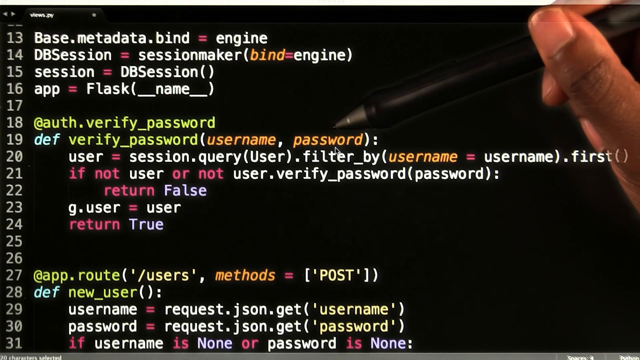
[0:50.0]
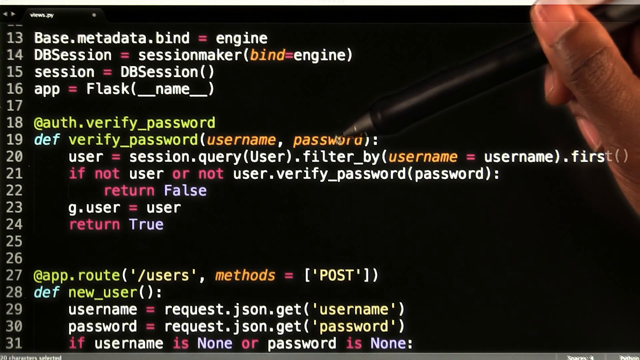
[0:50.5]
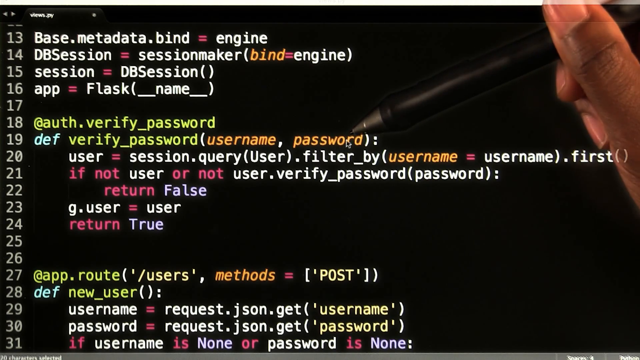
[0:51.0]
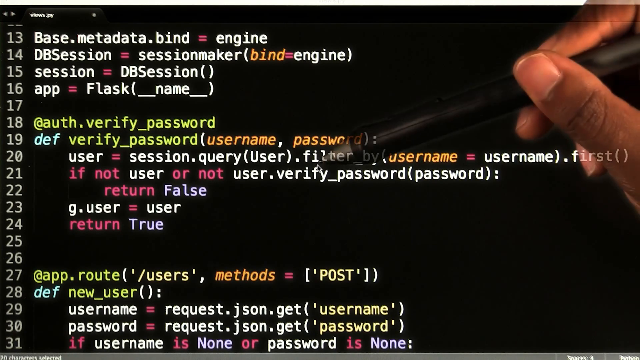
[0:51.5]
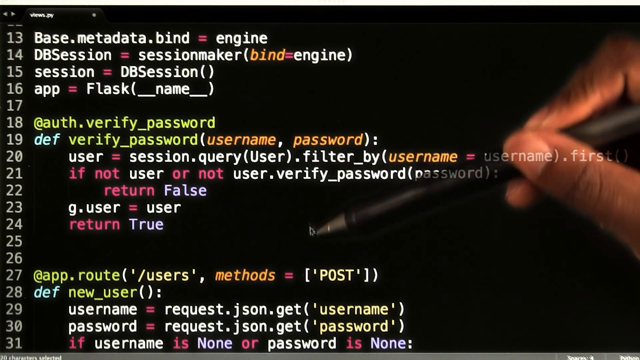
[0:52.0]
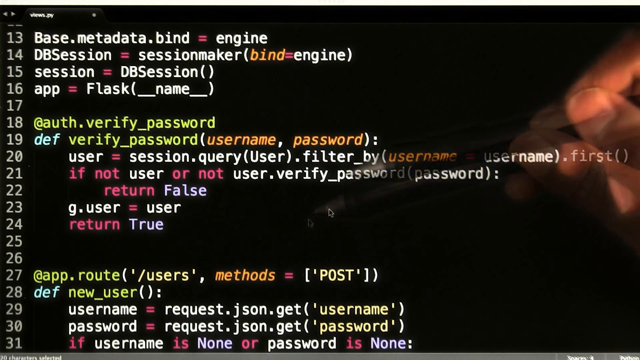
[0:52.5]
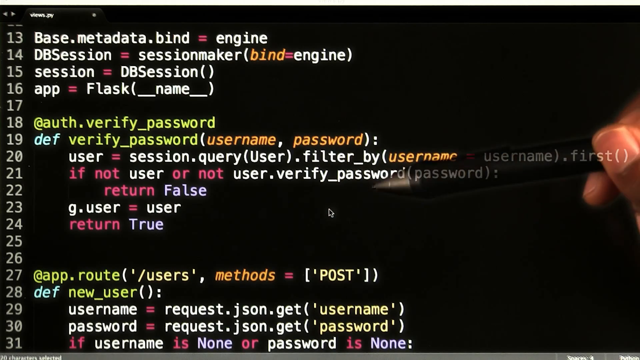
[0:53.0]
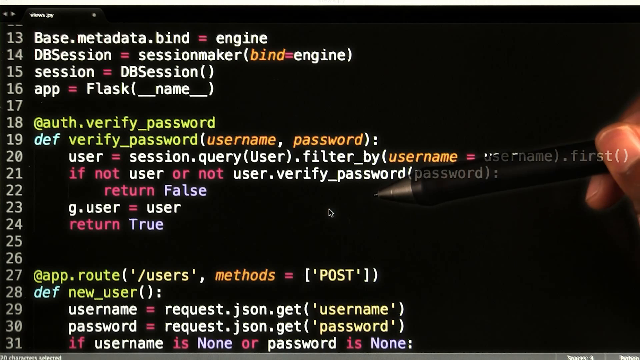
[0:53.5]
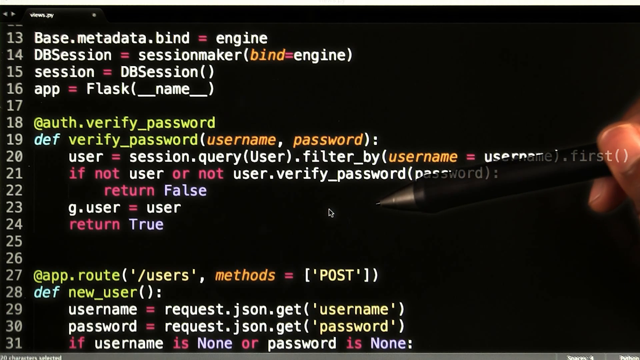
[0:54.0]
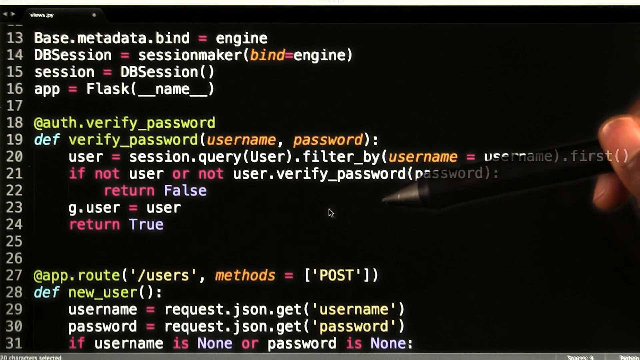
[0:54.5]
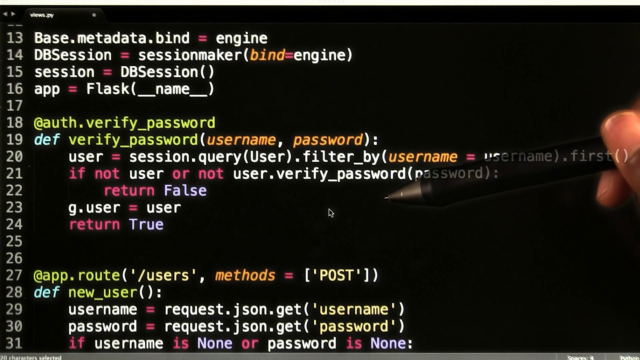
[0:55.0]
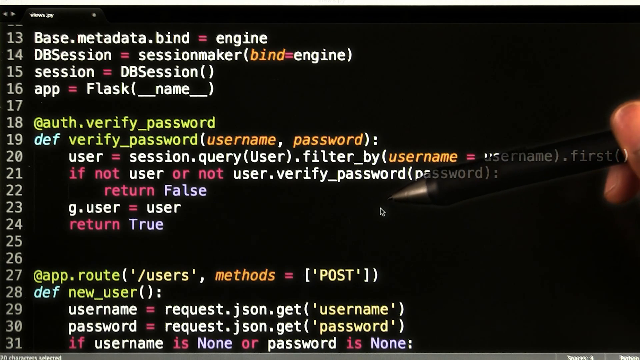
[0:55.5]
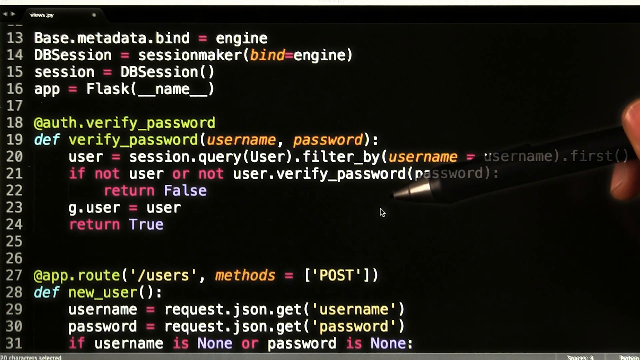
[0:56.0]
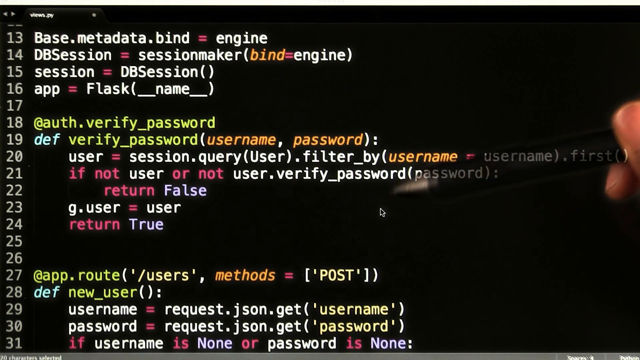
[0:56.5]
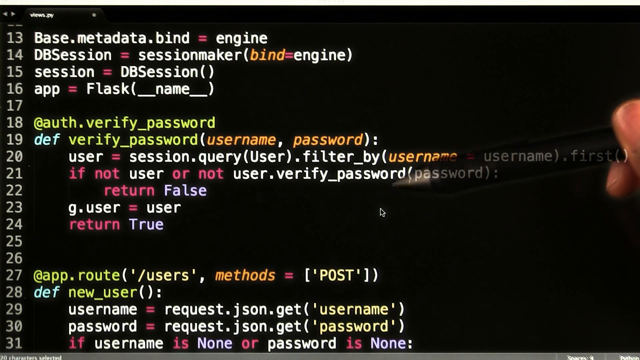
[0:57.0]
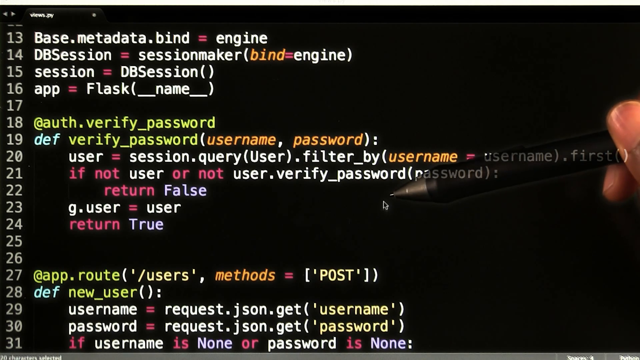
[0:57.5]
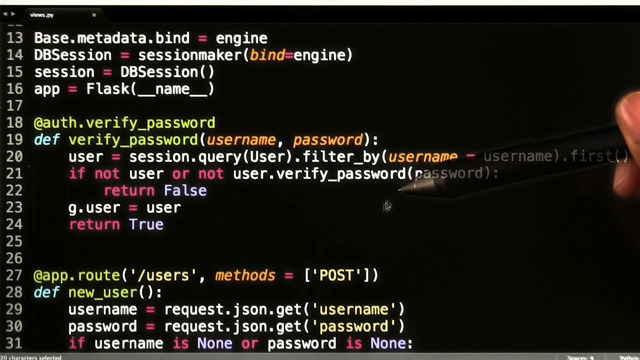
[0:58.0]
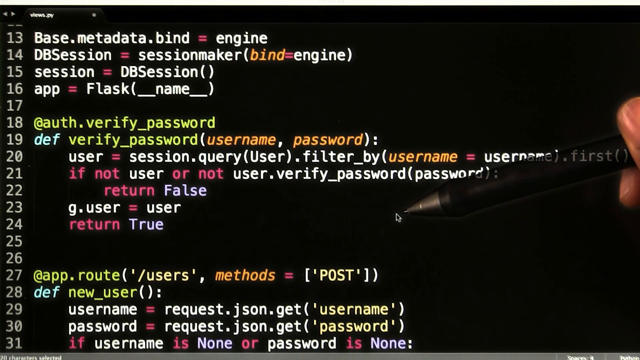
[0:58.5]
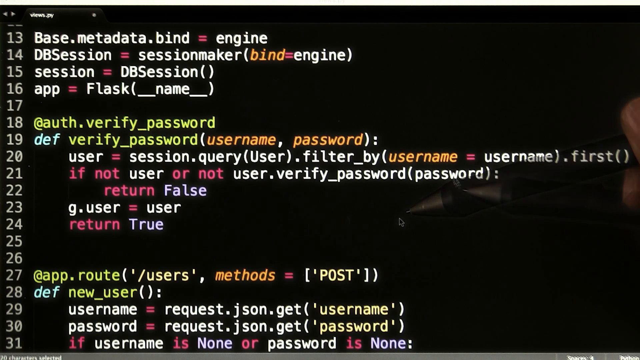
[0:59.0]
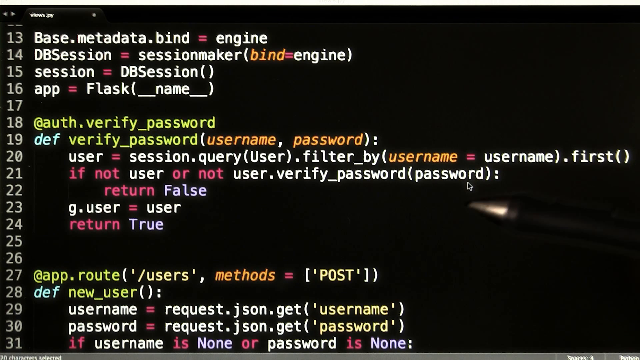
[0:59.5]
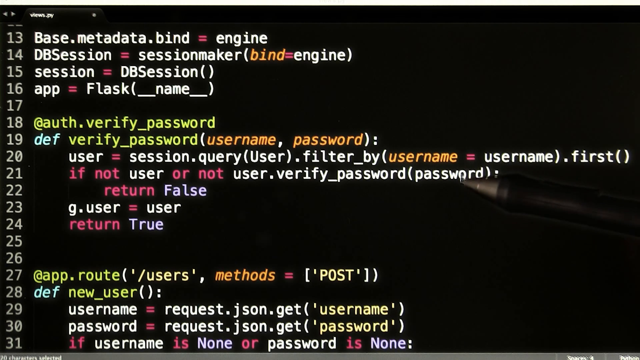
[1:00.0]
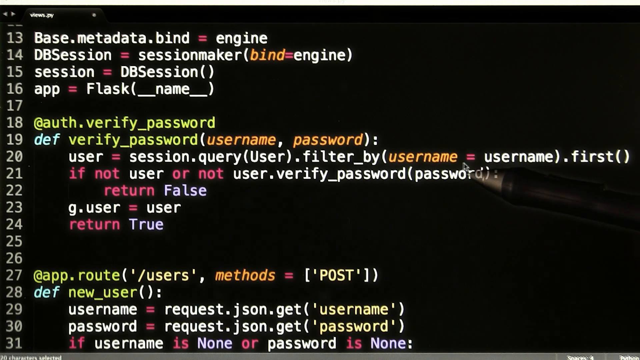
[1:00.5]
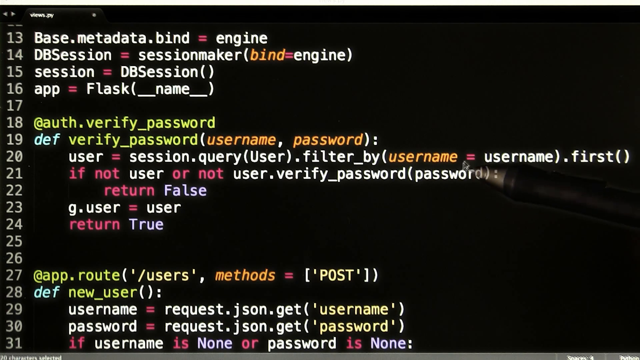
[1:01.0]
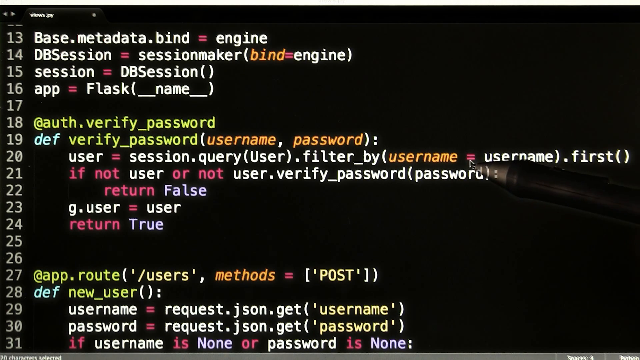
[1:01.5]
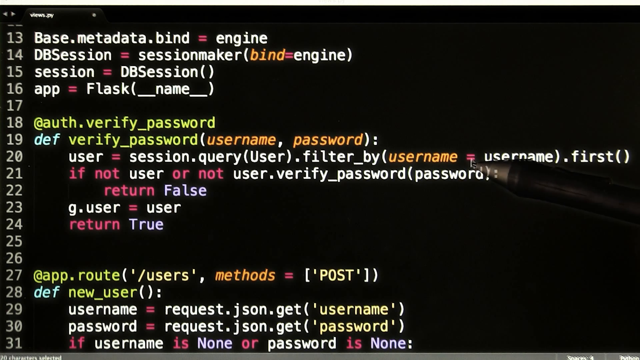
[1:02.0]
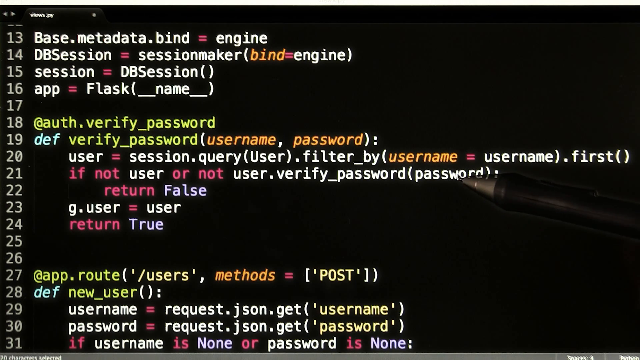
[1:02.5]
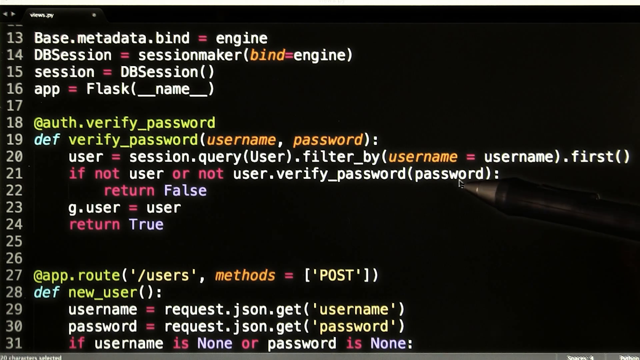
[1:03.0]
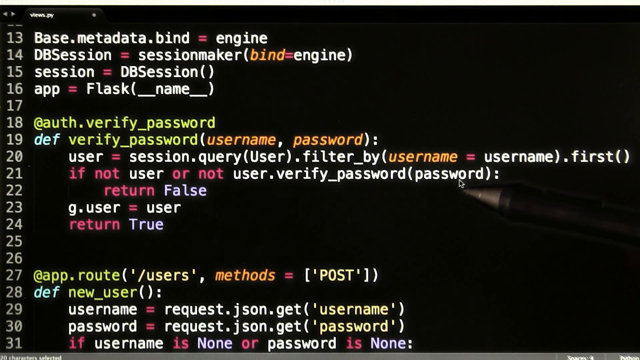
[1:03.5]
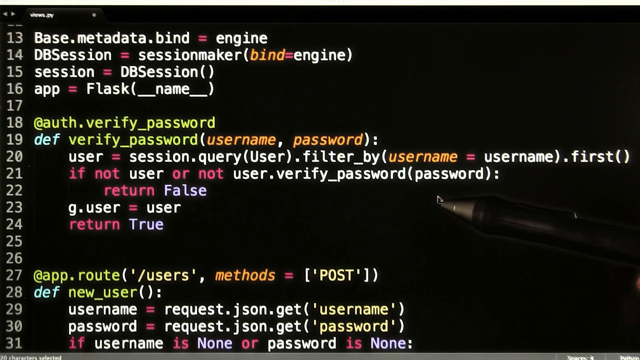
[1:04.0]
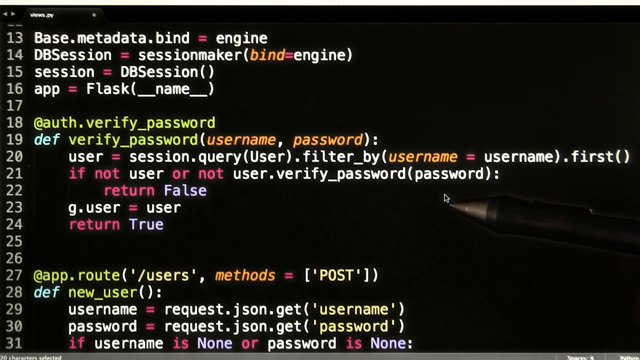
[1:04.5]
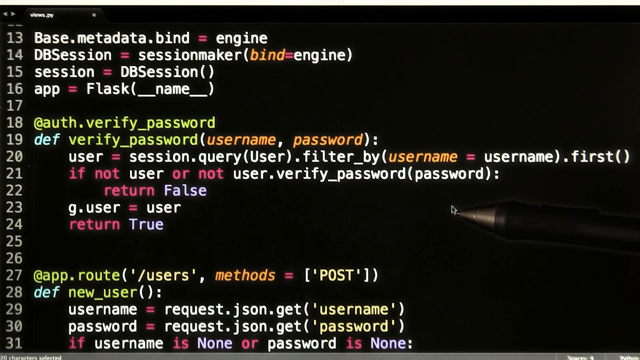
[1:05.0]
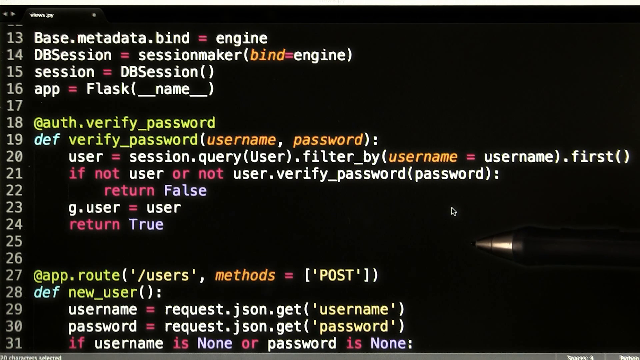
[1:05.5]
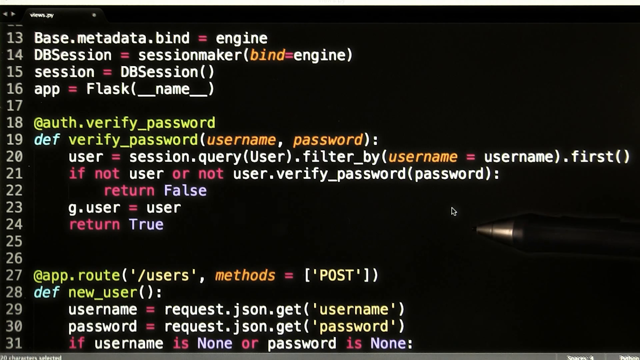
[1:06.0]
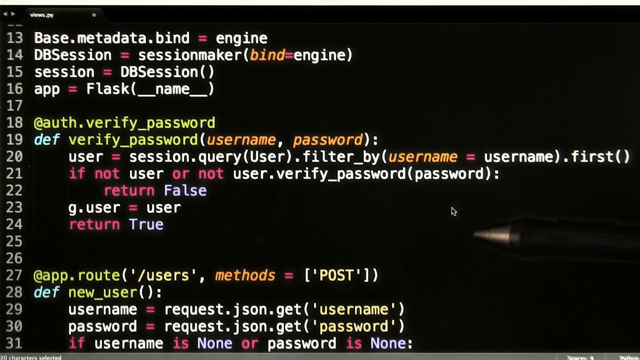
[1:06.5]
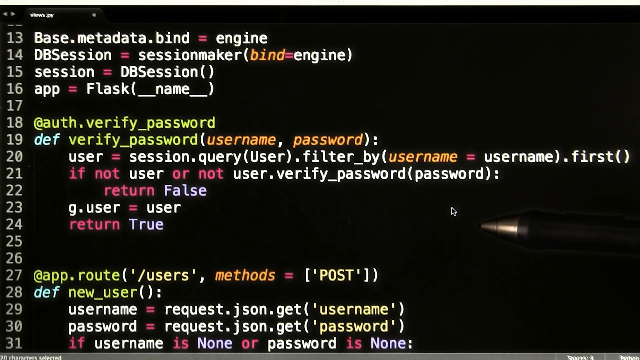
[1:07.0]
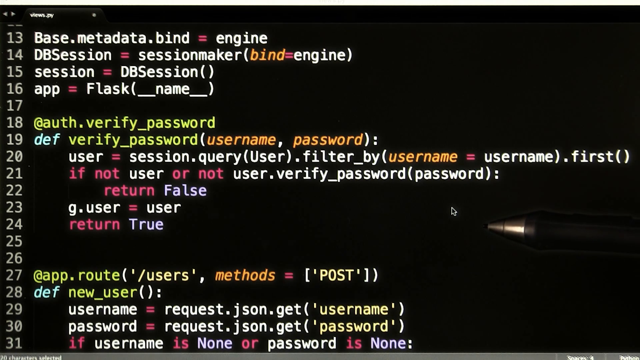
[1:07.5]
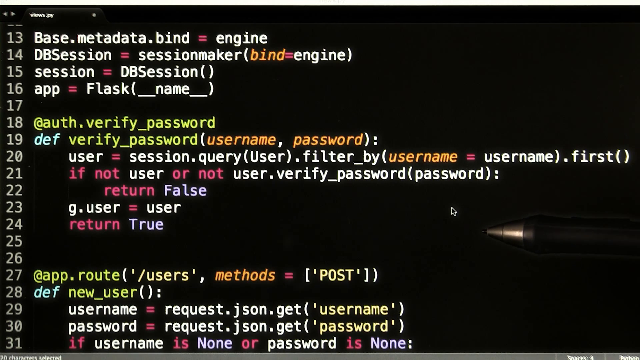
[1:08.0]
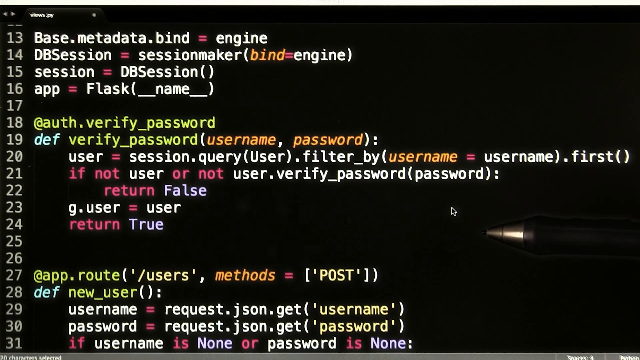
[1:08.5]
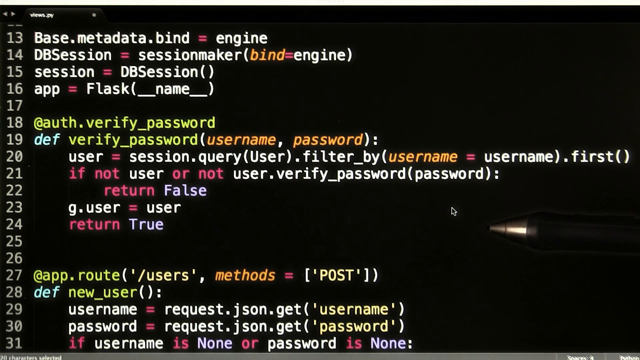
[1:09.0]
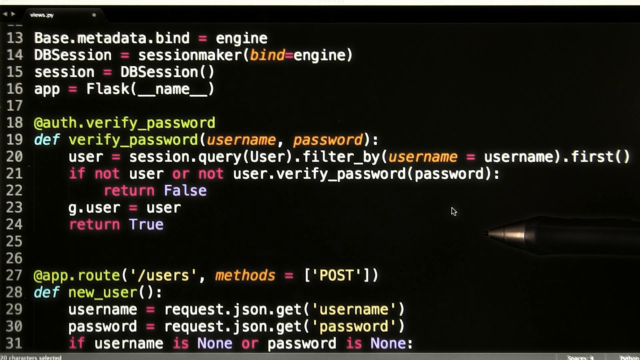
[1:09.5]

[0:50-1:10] On a black screen, a hand on the right-hand side, with just the thumb and barely two fingers visible, holds a black pen in the top right-hand corner and points it at the screen. The pen hovers over the black section, moving from line 17 down to line 23 while wiggling around. It hovers above the section that says "password" and points its corner at the word "password". The pen then drops back down to line 25, a blank space, and hovers around that section. The hand then goes off screen, leaving only the first quarter of the pen, its tip, visible. The pen faces horizontally about three quarters of the way down the page, pointing towards line 25 just under the word "return" in pink and "true" in white.